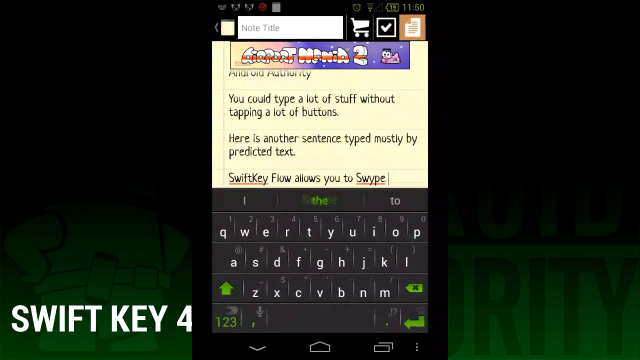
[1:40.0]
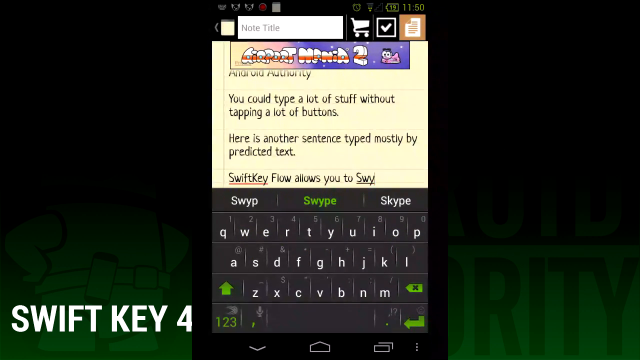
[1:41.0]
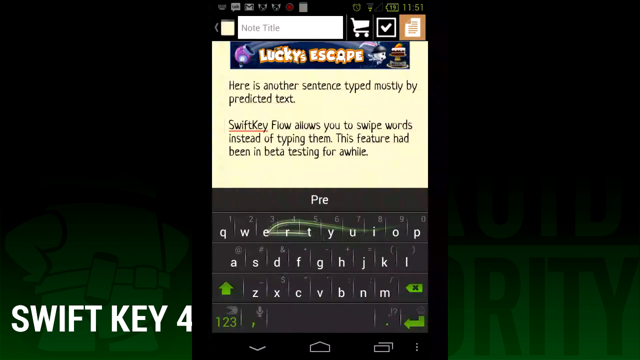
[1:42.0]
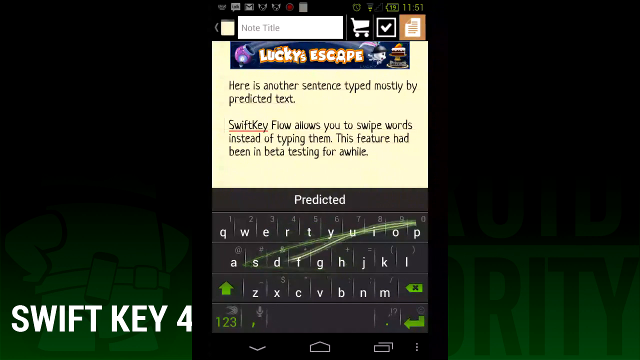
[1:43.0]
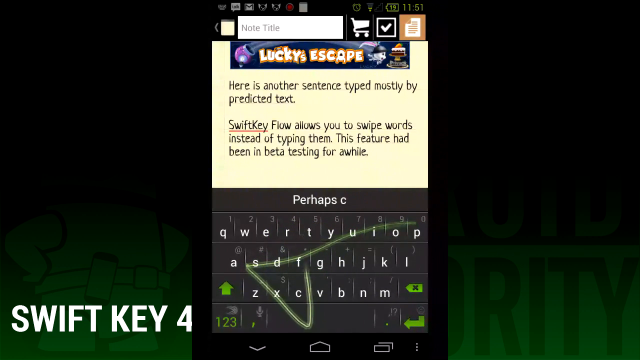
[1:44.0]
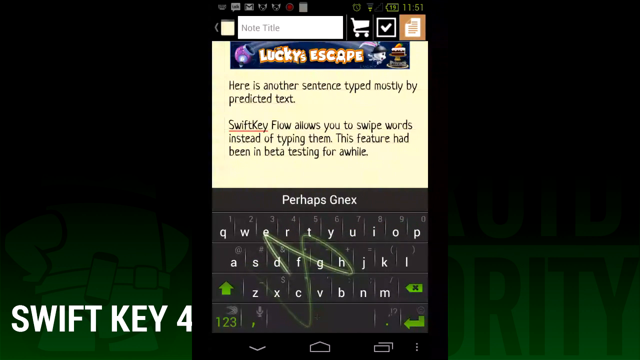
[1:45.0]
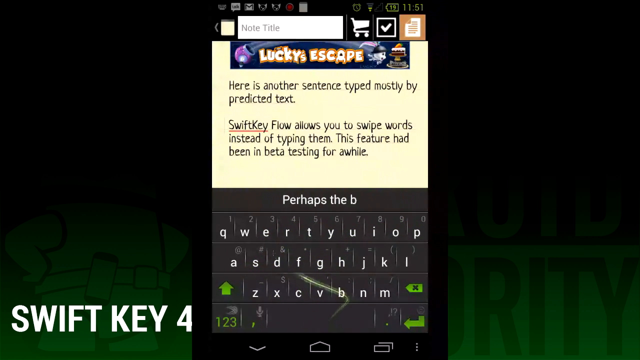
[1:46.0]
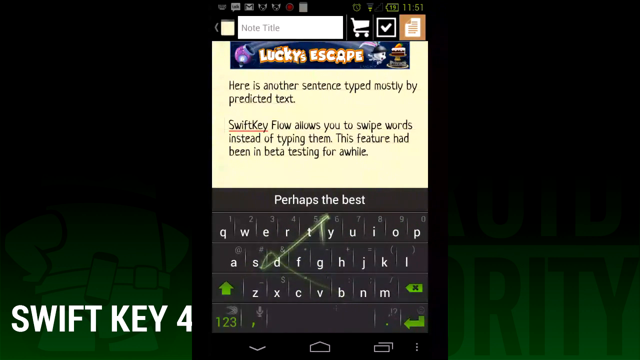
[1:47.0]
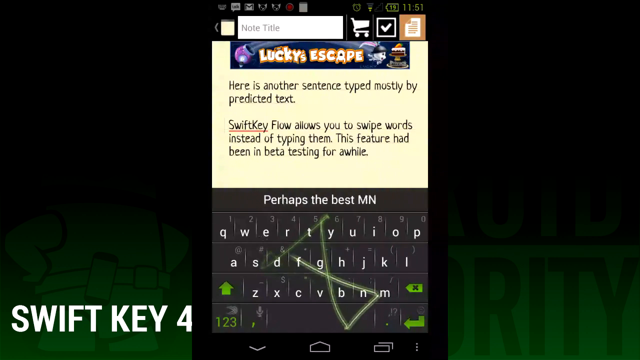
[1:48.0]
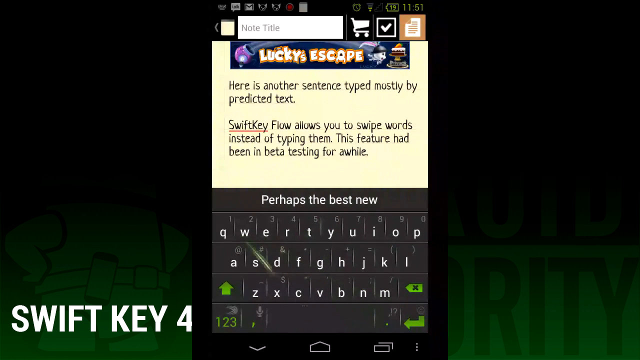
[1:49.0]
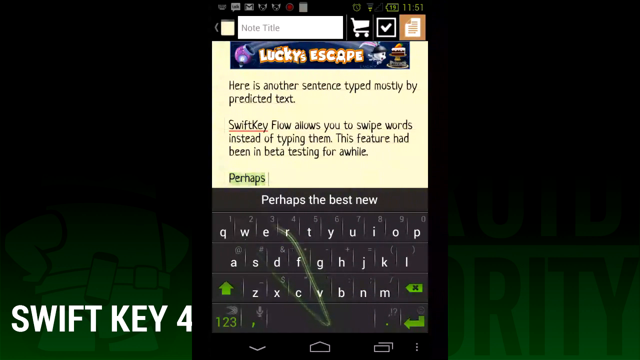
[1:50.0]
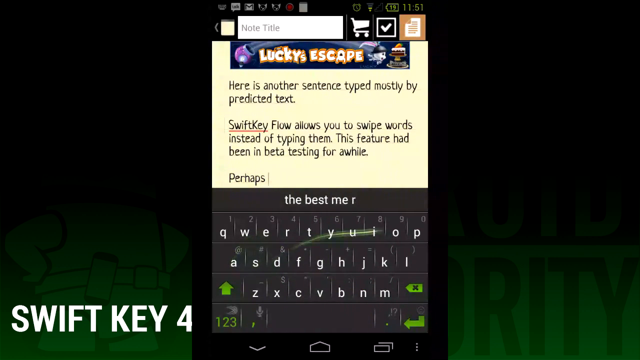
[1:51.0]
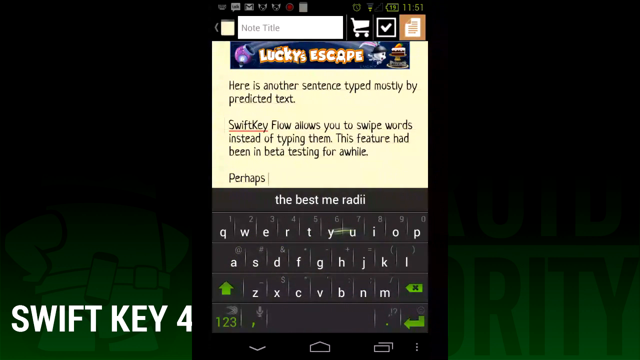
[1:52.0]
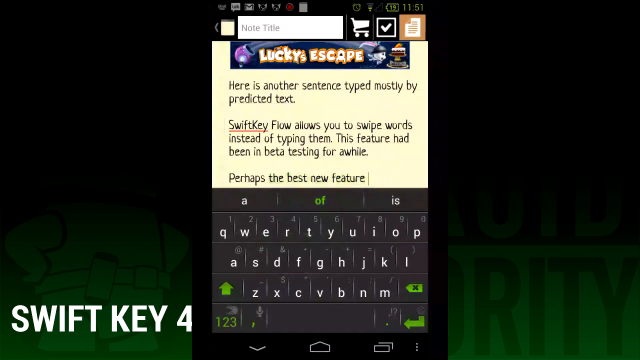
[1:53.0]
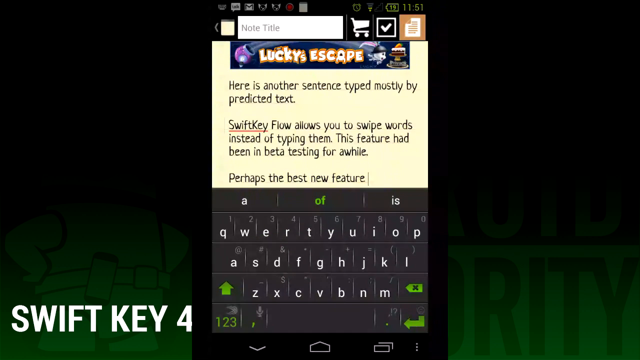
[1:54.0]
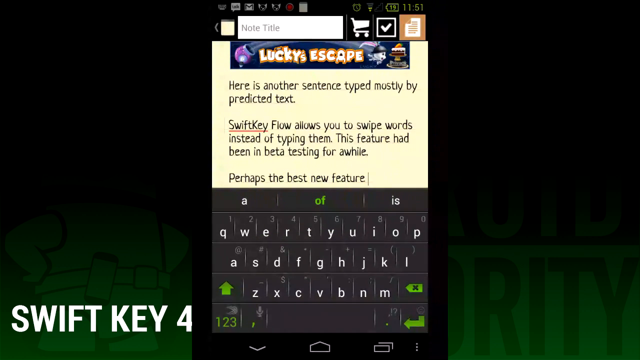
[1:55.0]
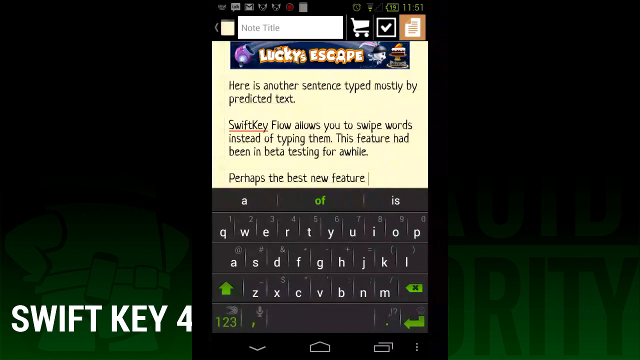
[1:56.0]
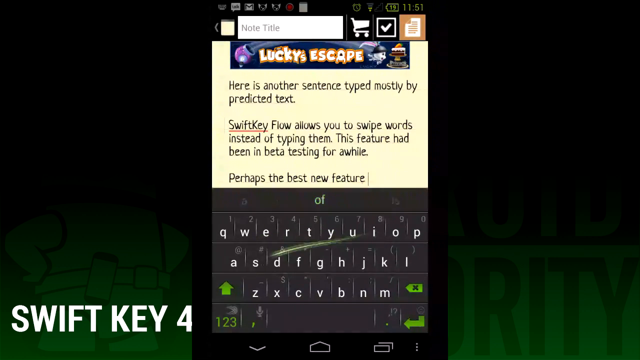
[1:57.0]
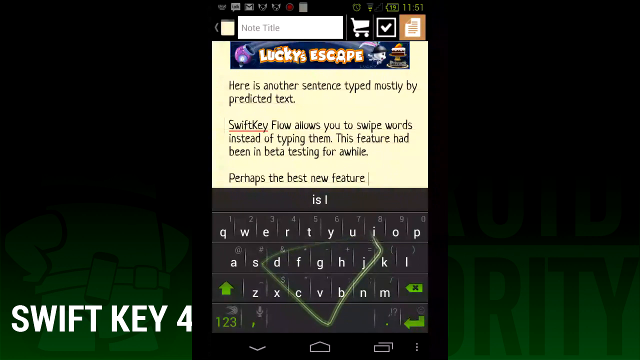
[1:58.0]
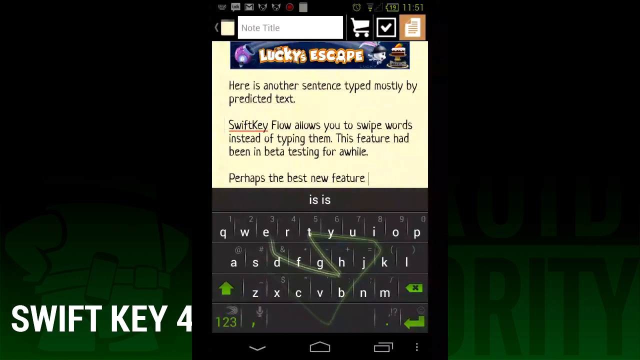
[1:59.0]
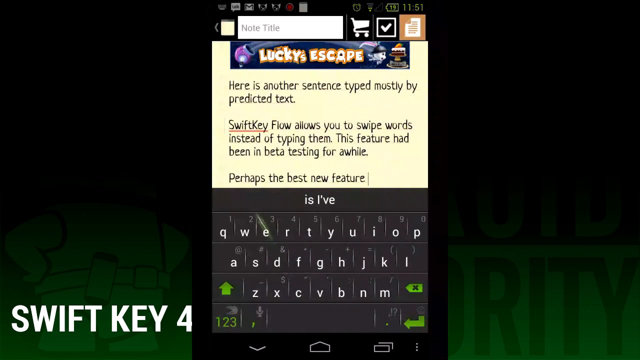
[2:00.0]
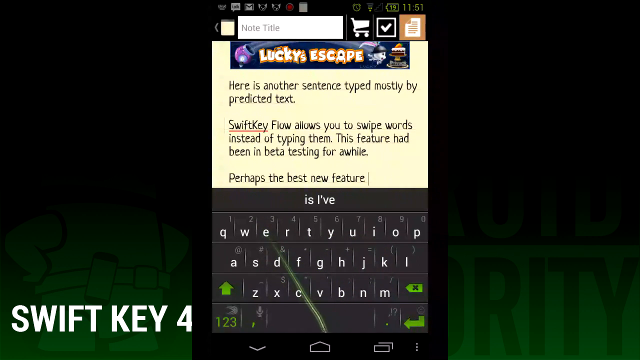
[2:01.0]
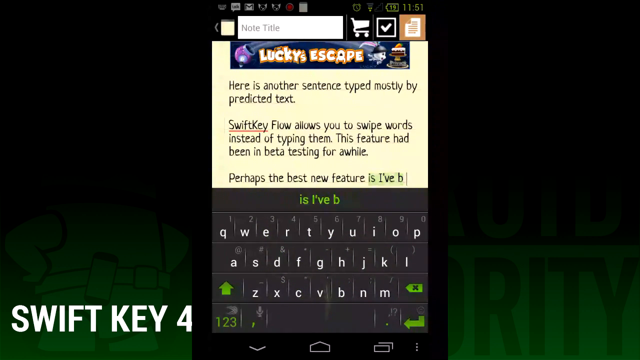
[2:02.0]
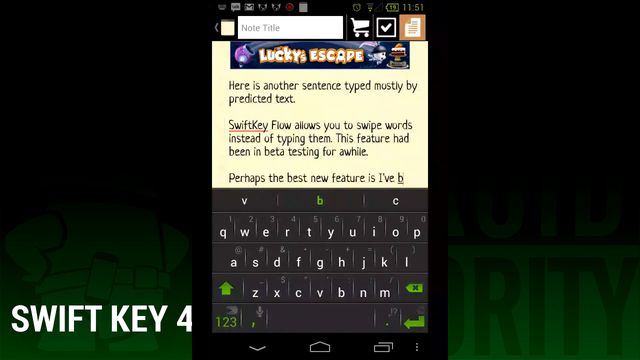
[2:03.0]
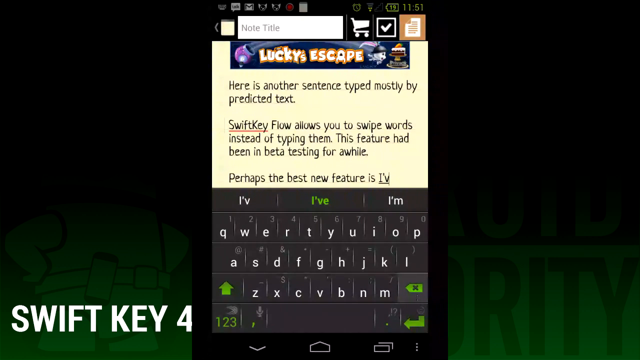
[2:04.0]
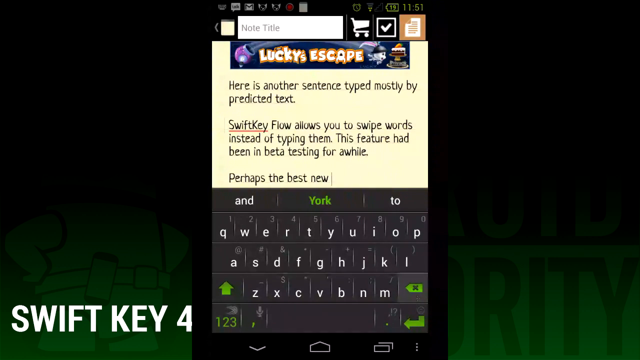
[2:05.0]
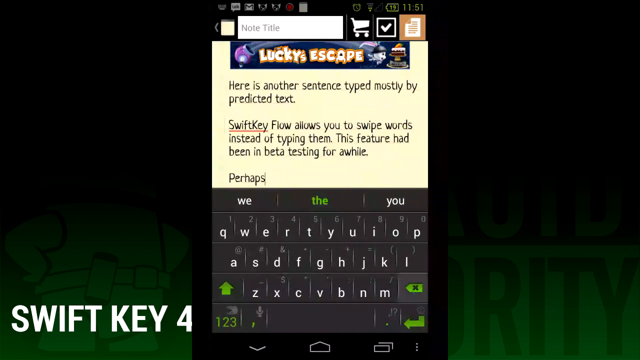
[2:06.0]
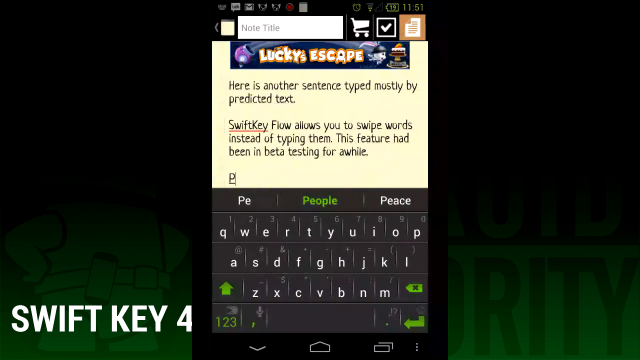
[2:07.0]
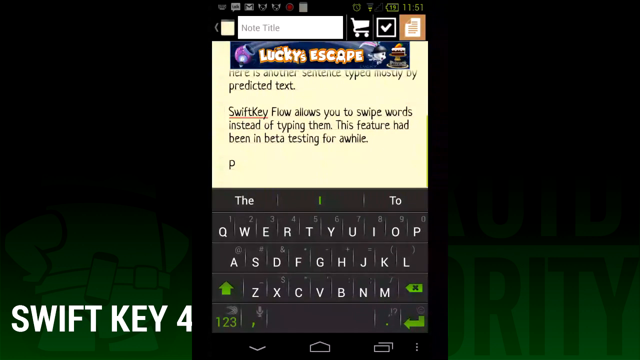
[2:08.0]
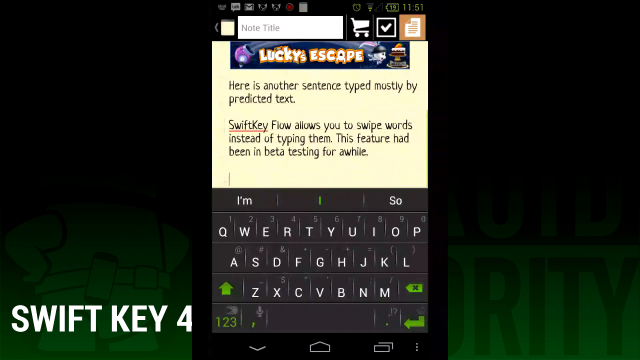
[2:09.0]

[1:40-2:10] The phone screen is yellow and the typed words are black. It reads "Android Authority", then after a space "you could type a lot of stuff without tapping a lot of buttons", then after another space "here is another sentence typed mostly by predicted text". After more space, "SwiftKey" has a red underline beneath it, apparently marking it as misspelled, while in the lower left-hand corner there is a space between "Swift" and "Key". The text continues: "SwiftKey flow allows you to swipe words instead of typing them. This feature had been in beta testing for a while." One suggested word says "perhaps", and then the text reads "perhaps the best new feature". Lines move all over the keyboard and new words come up.